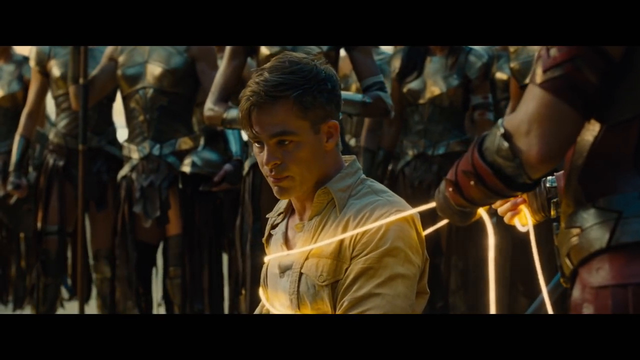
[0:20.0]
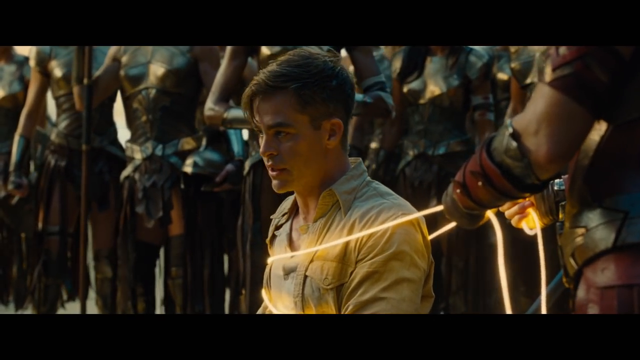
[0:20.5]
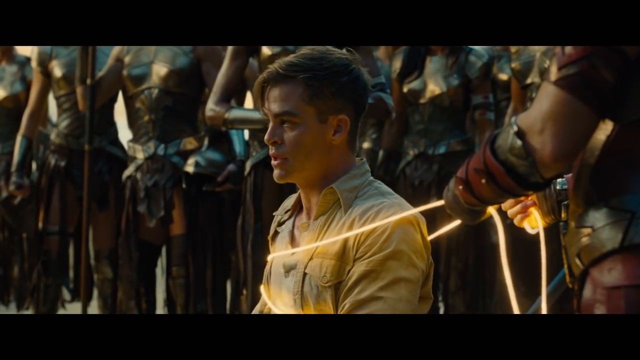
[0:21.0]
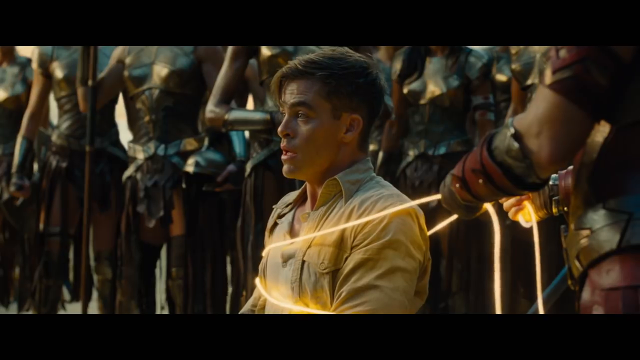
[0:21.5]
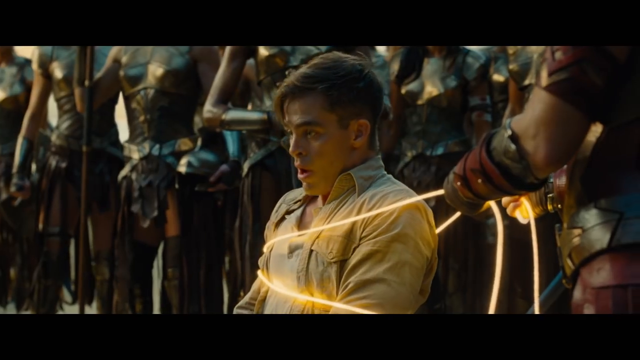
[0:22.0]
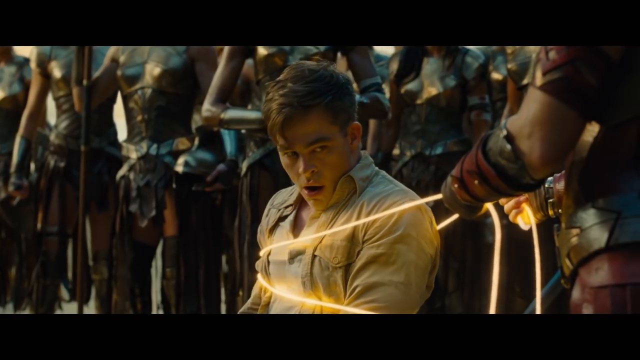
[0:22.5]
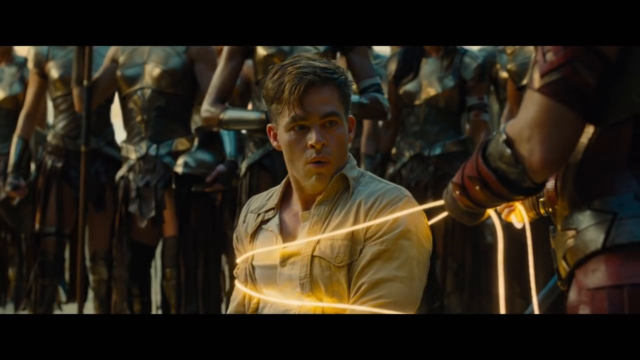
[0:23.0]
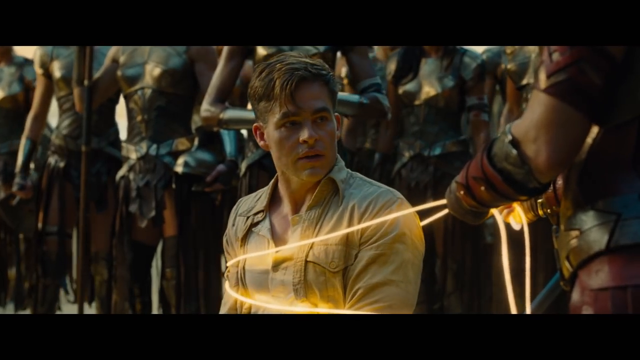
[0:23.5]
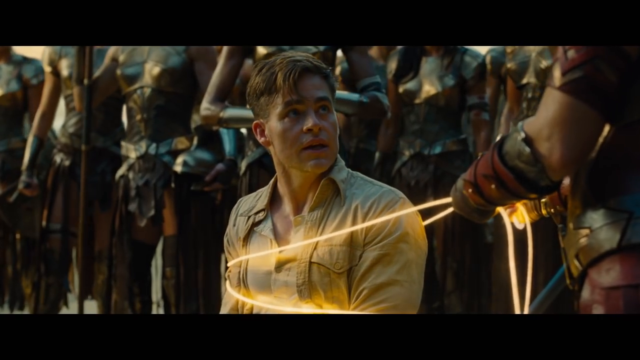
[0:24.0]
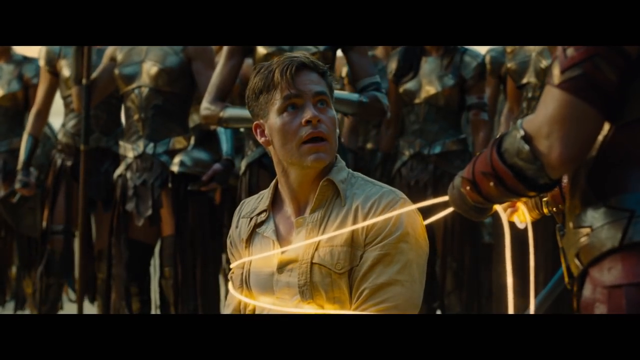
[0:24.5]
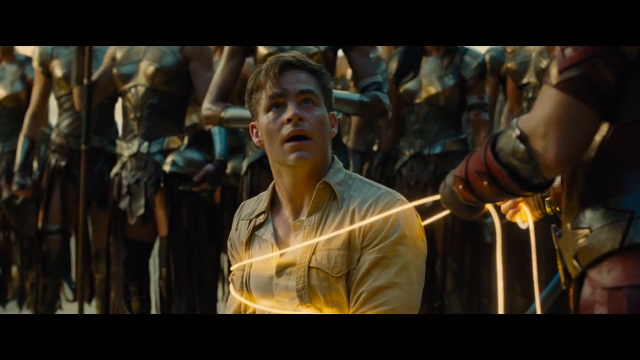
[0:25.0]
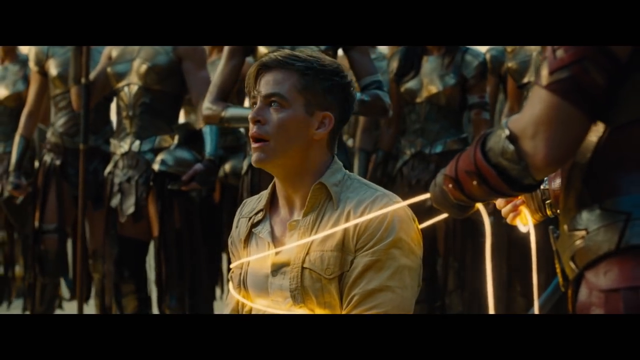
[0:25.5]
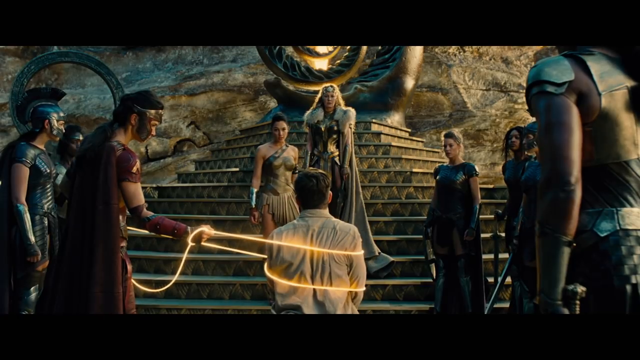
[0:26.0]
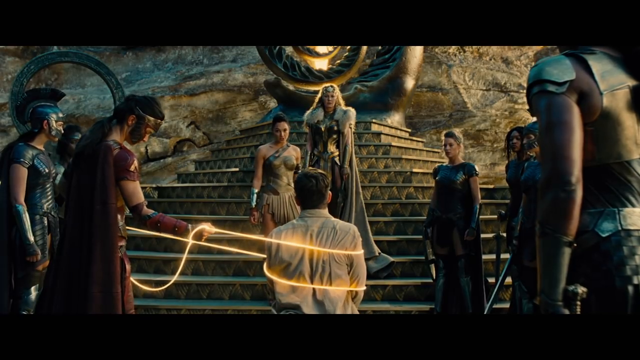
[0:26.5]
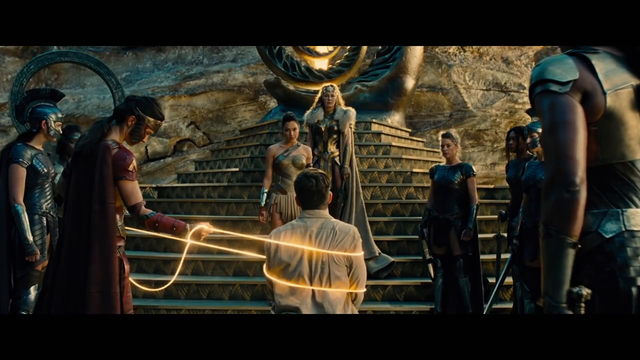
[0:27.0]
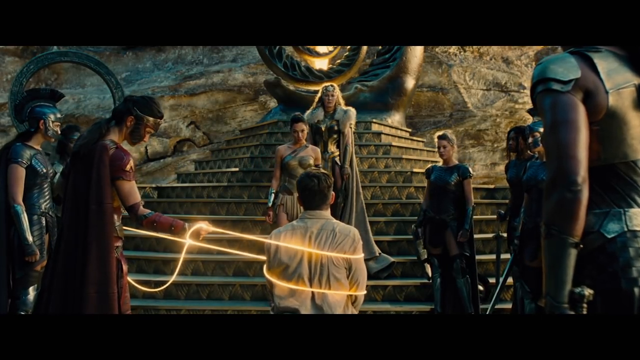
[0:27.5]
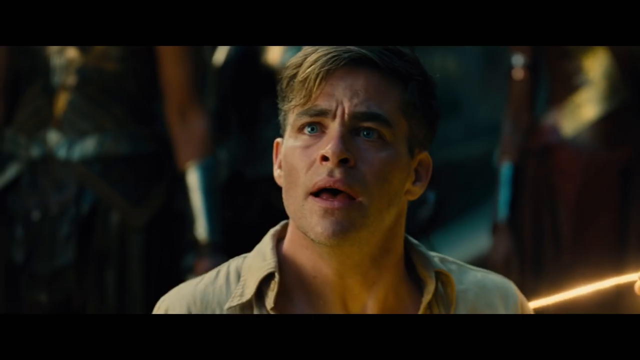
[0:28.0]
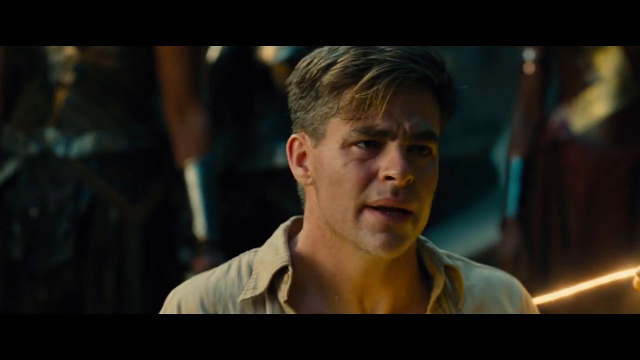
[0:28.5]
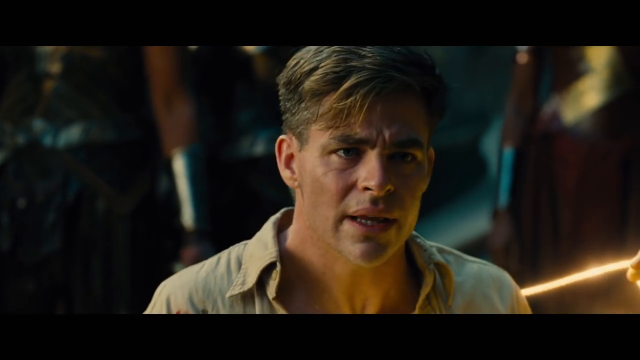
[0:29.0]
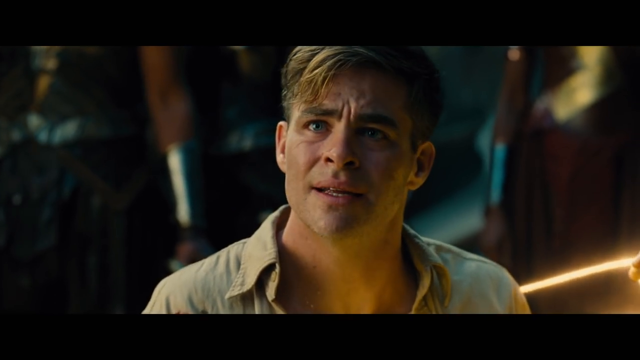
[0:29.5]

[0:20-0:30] A man in a button-down shirt is held captive by a gold glowing rope and looks down with a worried look on his face. Beside him is the person holding the rope on him, and behind him are groups of others, one of them standing with a stick. Looking overwhelmed and frightened, the man turns to his side and begins speaking to the person holding him with the rope. He then turns back forward and looks surprised, and the camera shows two women standing before him, one looking directly down at him. He appears to be pleading with the woman in front of him to let him go.